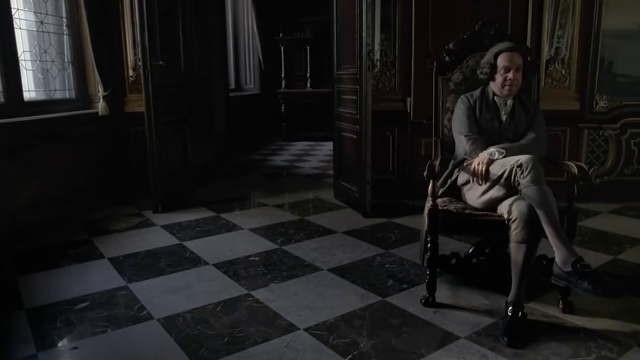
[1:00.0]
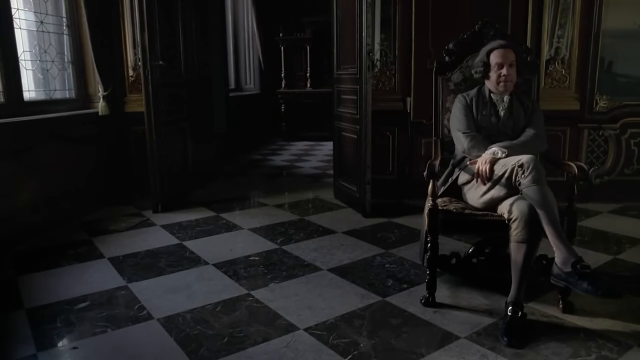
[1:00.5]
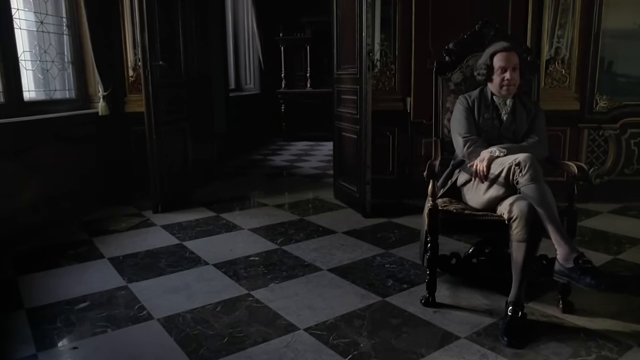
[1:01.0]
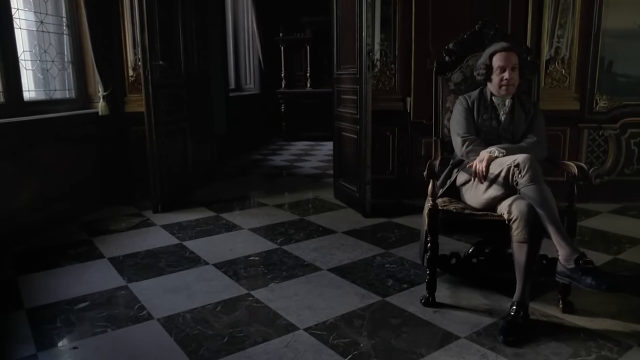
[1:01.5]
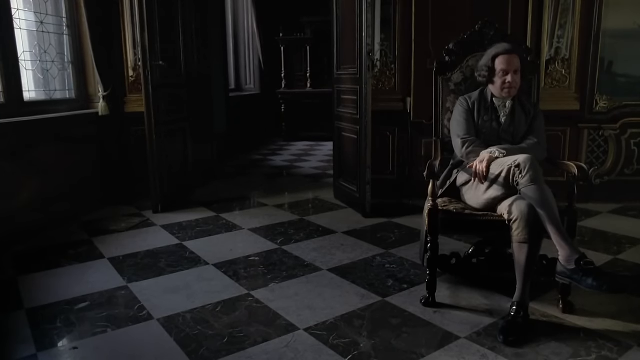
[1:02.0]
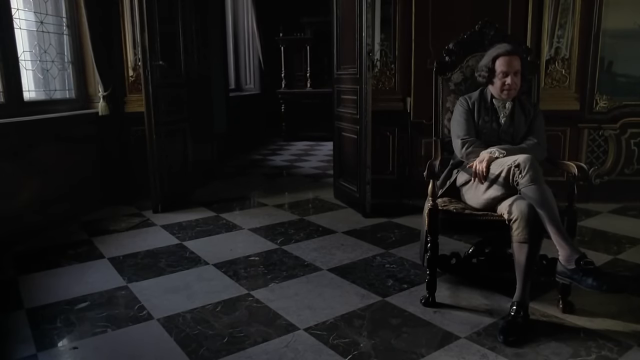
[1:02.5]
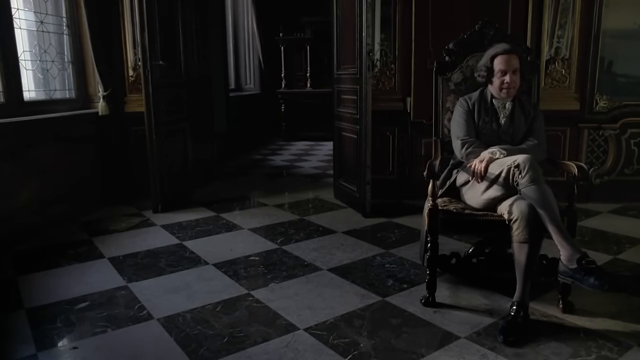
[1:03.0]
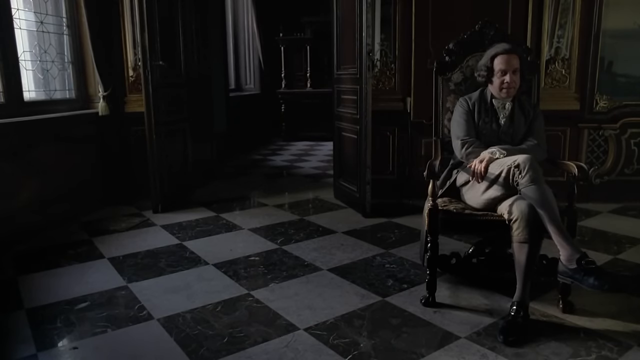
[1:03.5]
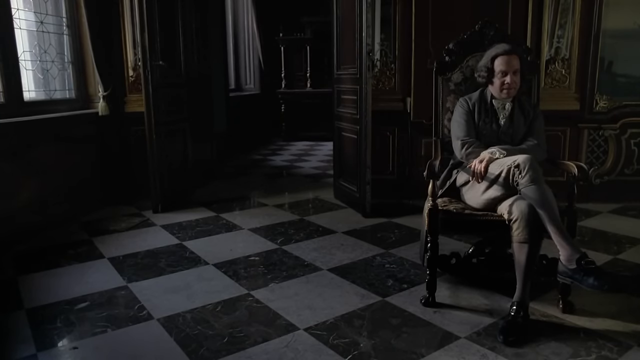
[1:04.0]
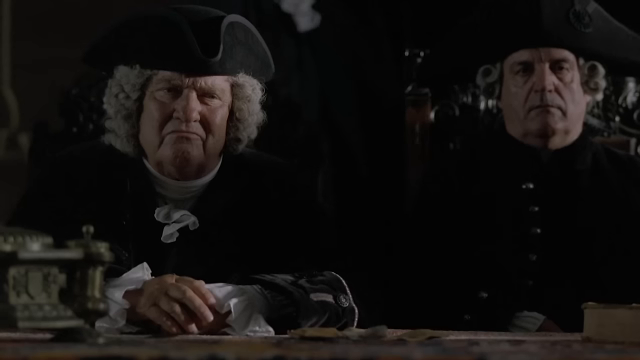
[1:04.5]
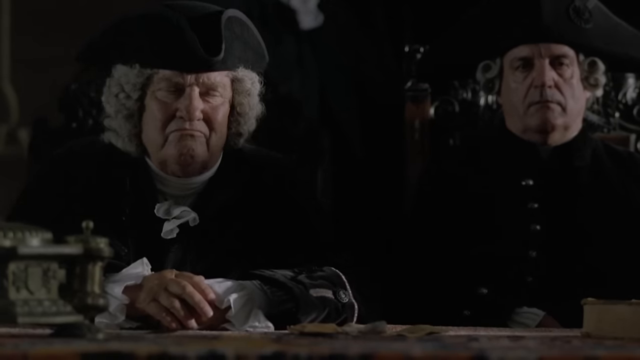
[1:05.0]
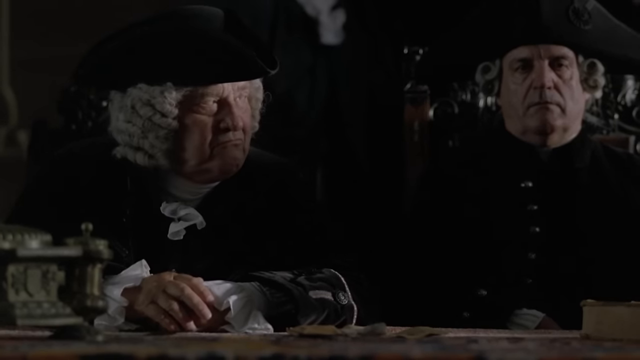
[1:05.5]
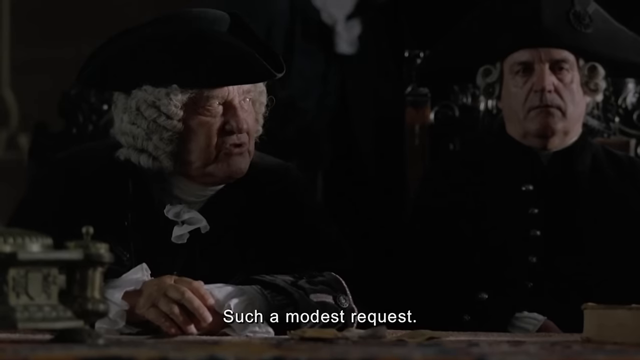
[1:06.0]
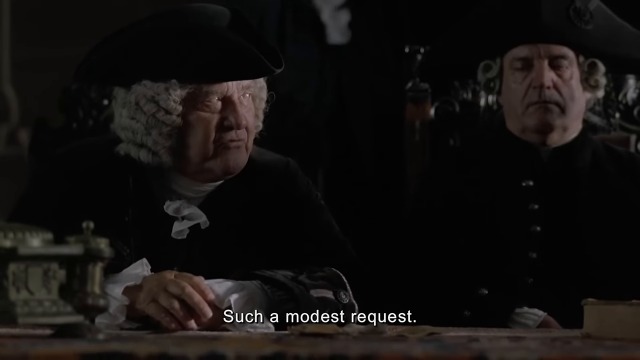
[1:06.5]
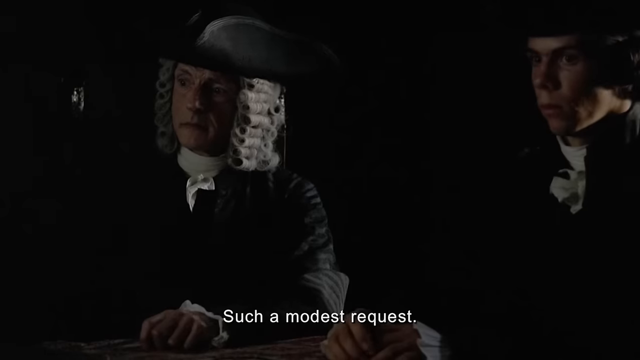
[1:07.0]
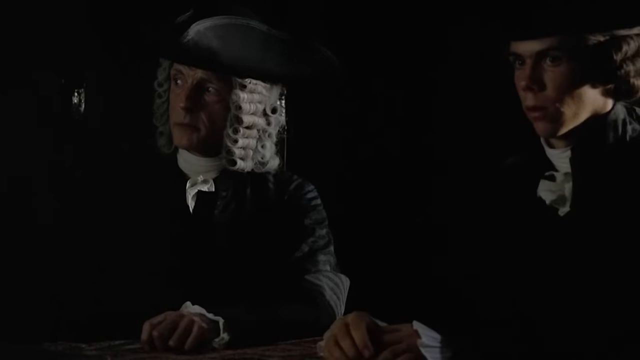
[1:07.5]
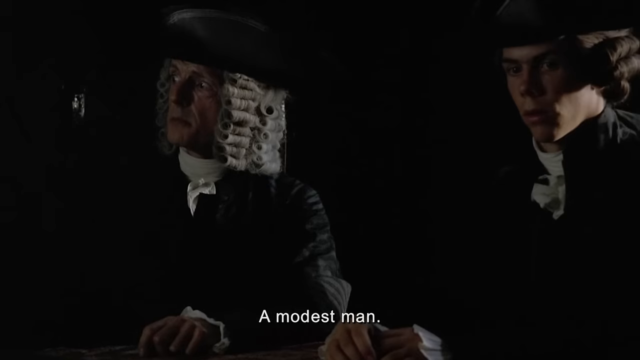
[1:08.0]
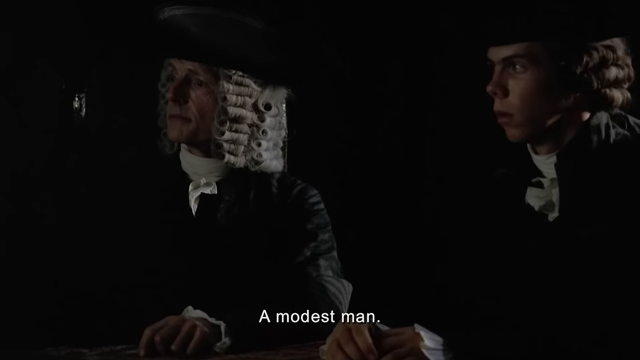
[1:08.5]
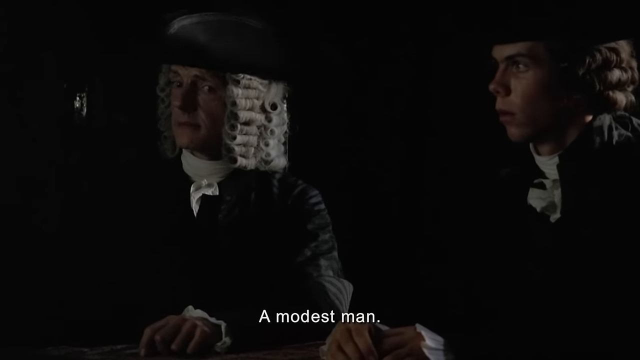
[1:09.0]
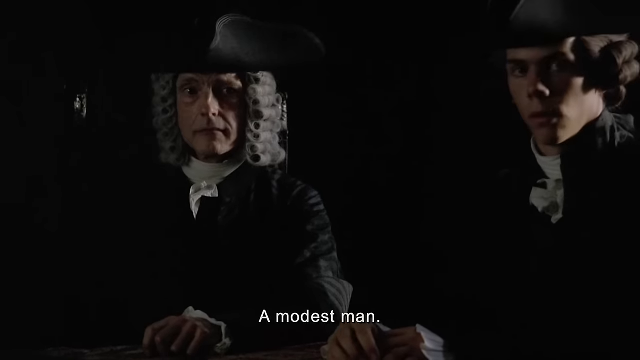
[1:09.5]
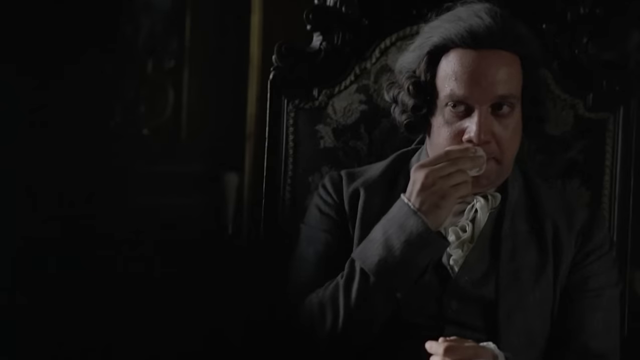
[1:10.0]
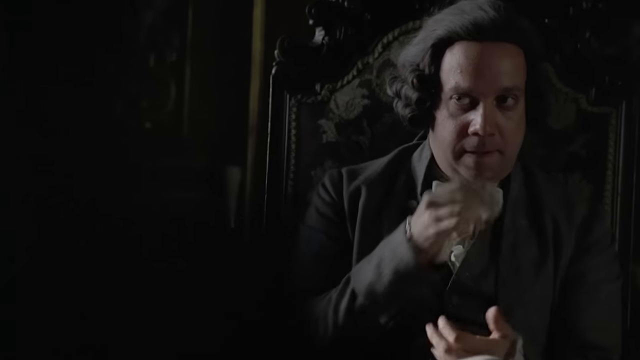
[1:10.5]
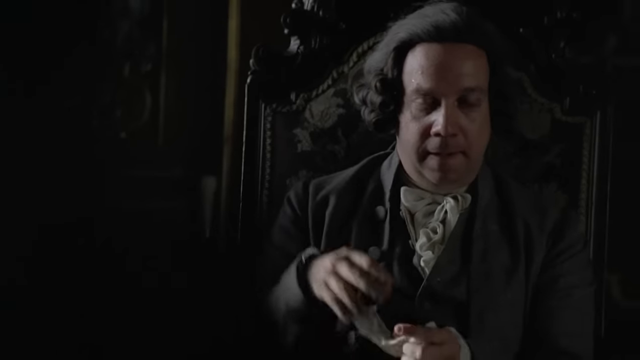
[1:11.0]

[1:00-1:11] The man's full body is now visible: he sits on a chair with one leg on the other leg. The listeners show serious faces, and text at the bottom of the screen reads "such a modest request". He wipes his mouth, keeps talking and moves his hands, and laughs while sitting in the chair. The listeners then appear amused and surprised.